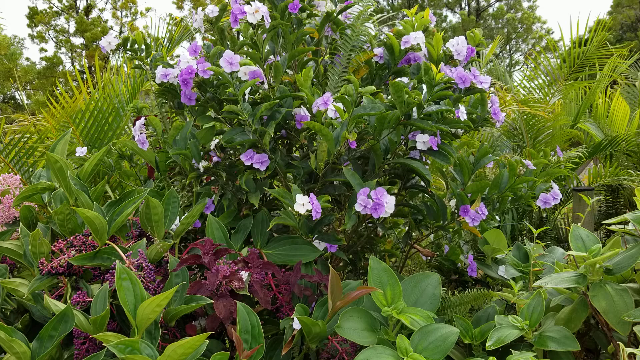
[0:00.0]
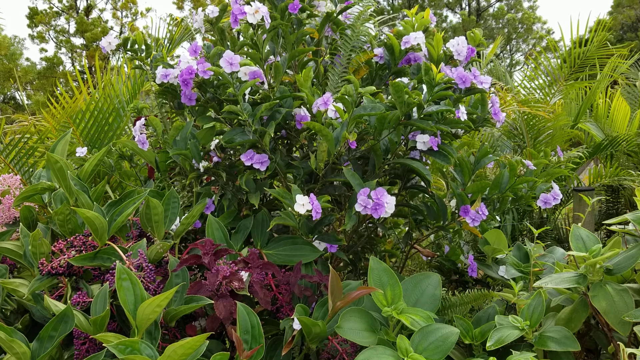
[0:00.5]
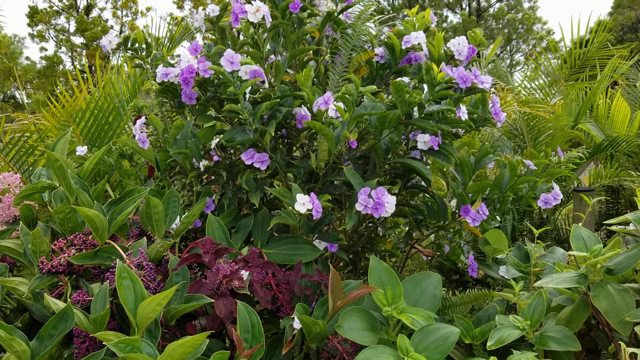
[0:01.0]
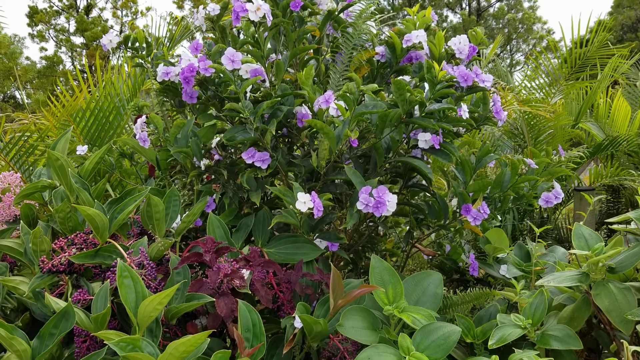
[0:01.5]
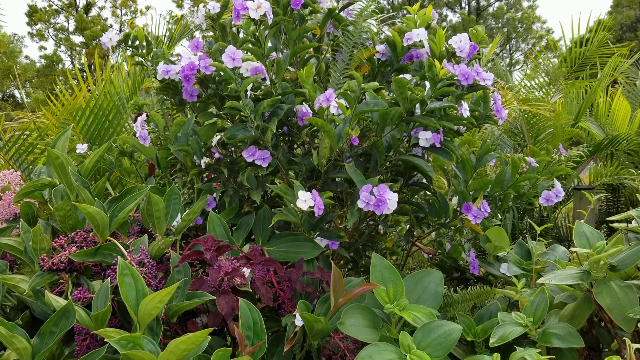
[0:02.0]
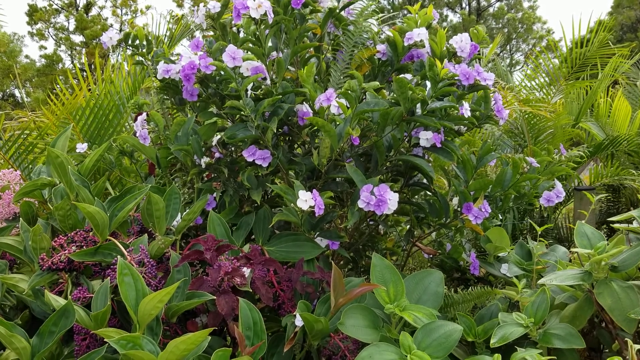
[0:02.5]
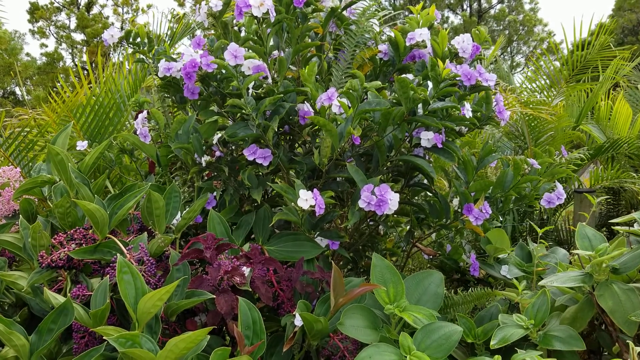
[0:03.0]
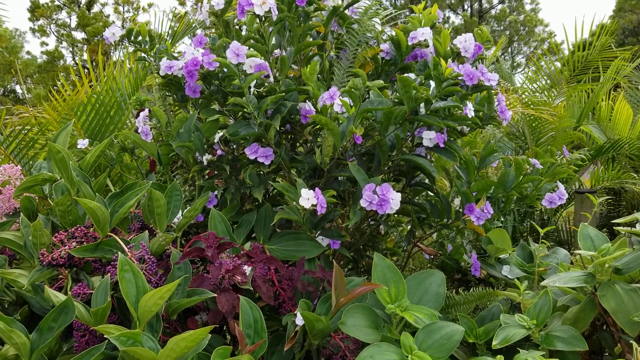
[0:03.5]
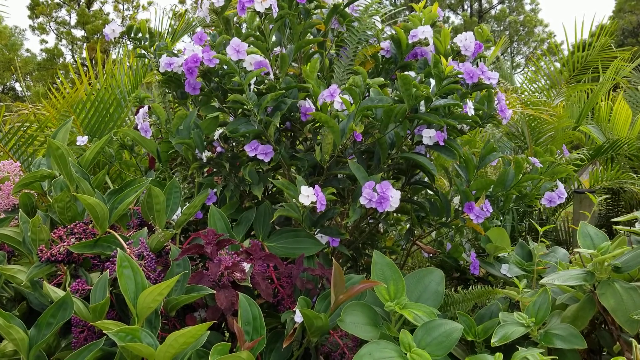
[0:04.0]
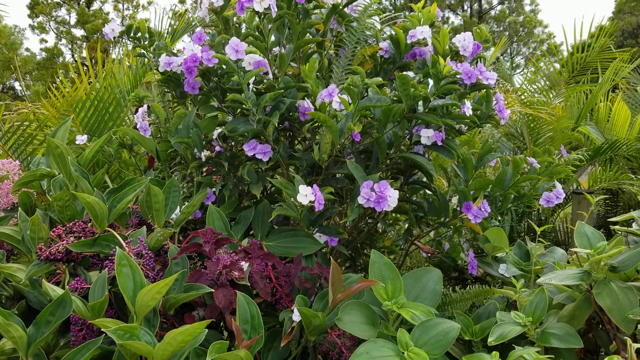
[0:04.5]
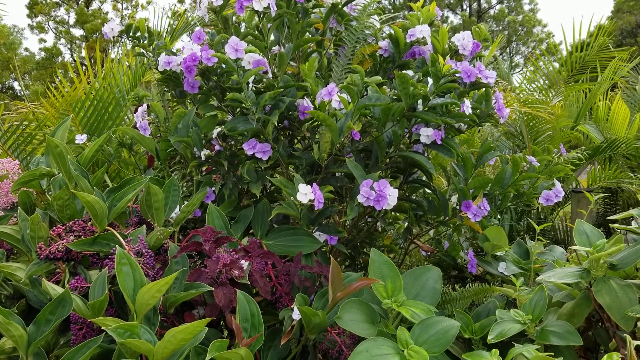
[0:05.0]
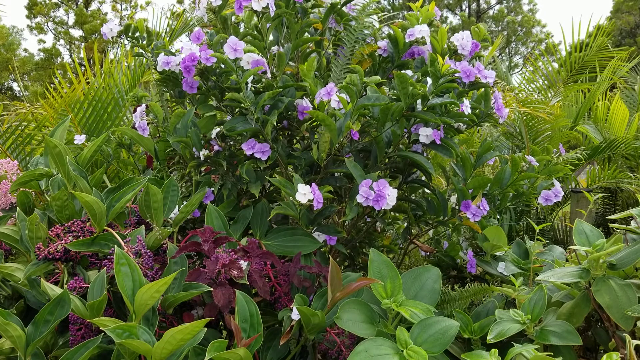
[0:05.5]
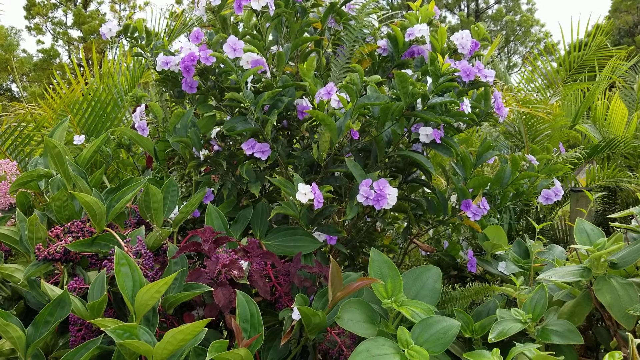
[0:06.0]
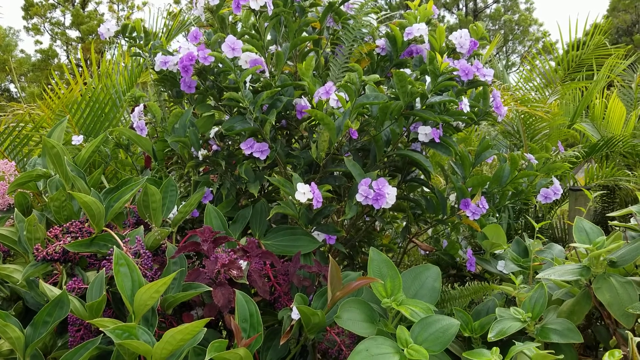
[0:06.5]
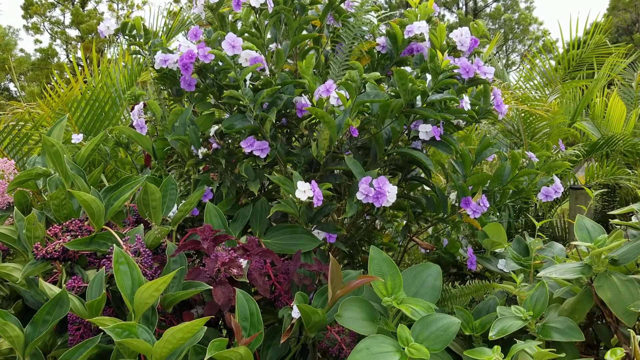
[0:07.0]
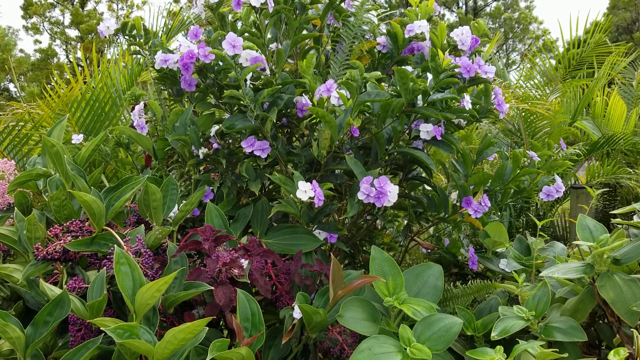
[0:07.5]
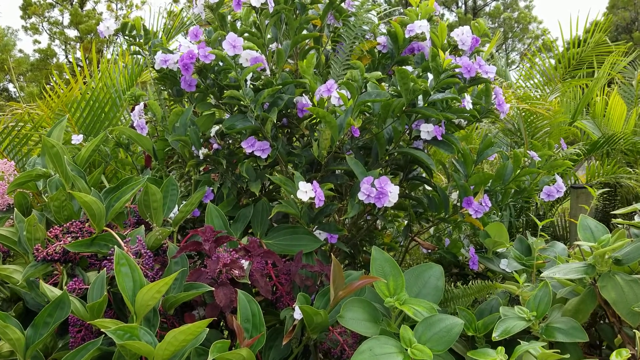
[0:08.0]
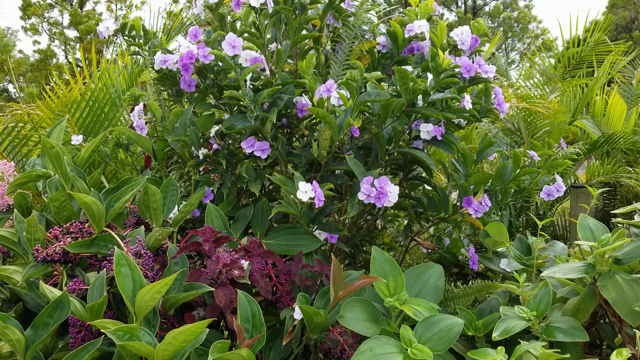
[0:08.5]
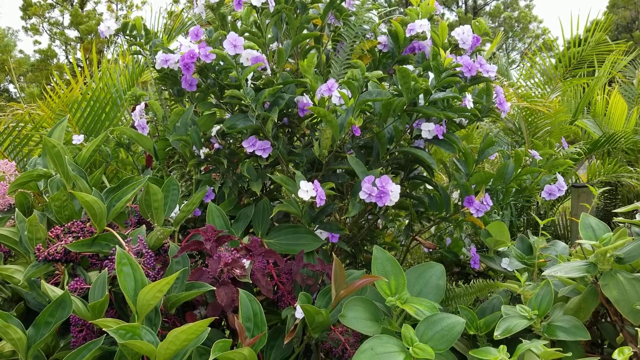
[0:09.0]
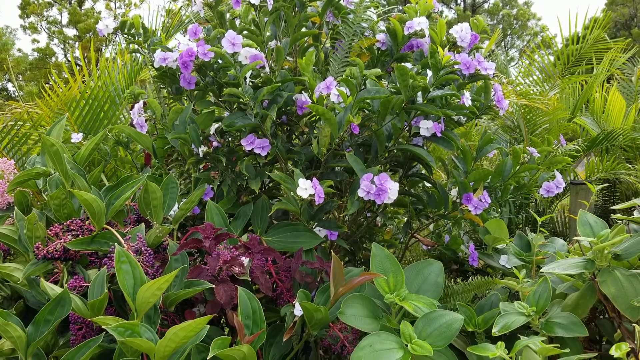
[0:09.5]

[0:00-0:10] A single shot shows a dark green bush with small light purple and white flowers at the ends of its branches, each about the size of a tennis ball. Other green plants are planted around the bush, including one with long, skinny, pointy leaves. Trees and some of the sky are visible in the background. In front of the bush, other small leafy plants lay on the ground, surrounding it. The entire screen is nothing but plants.